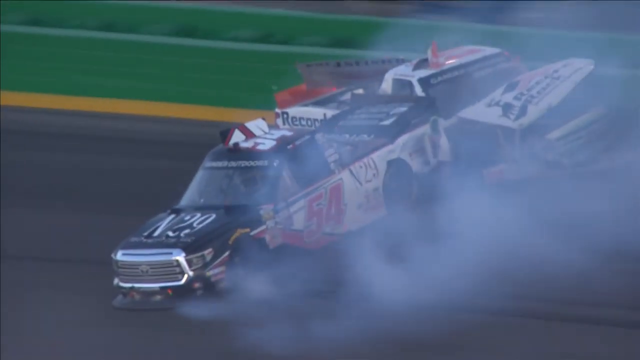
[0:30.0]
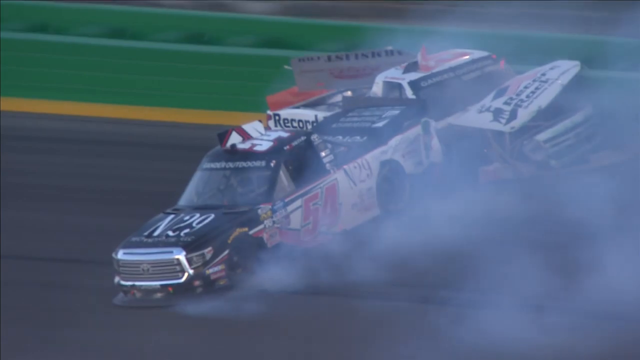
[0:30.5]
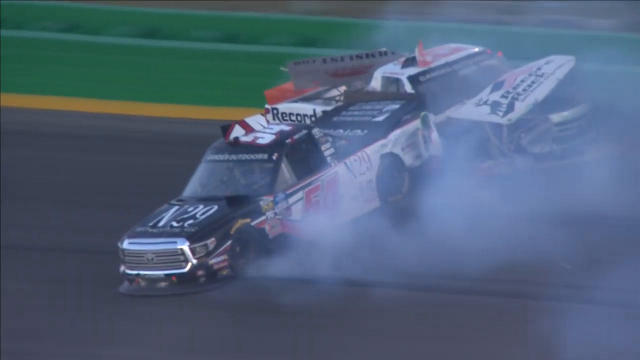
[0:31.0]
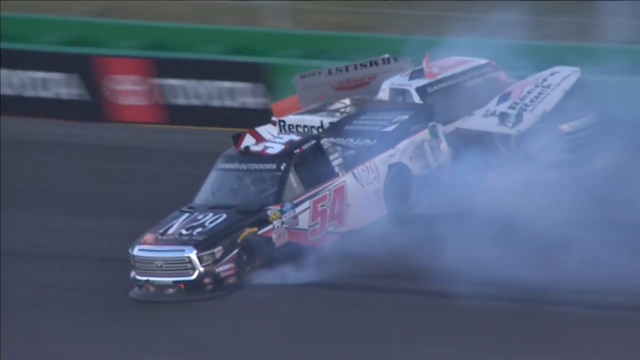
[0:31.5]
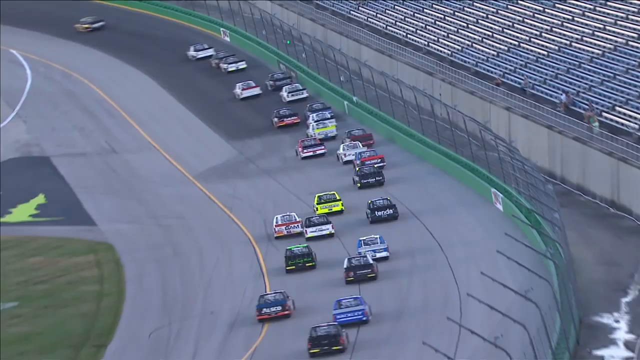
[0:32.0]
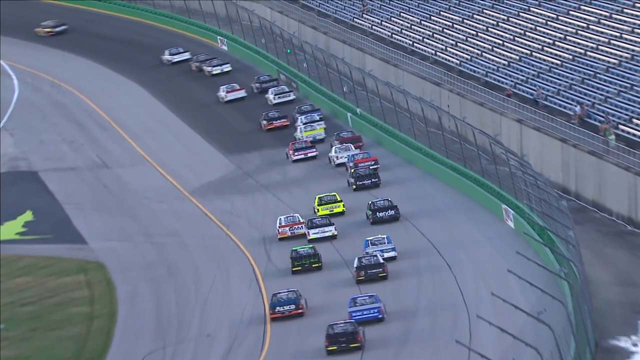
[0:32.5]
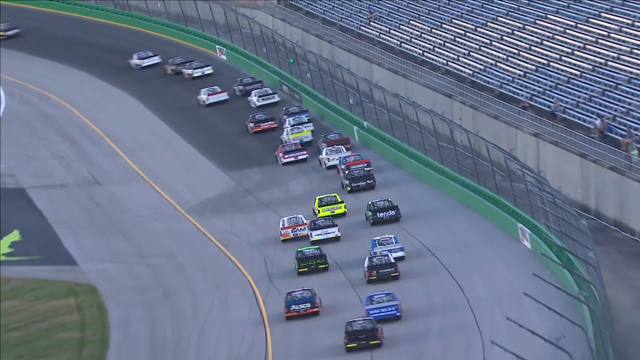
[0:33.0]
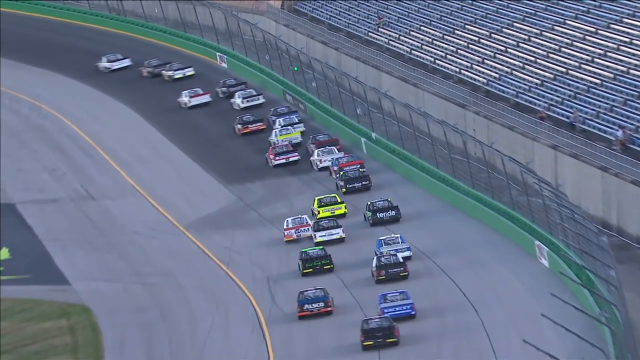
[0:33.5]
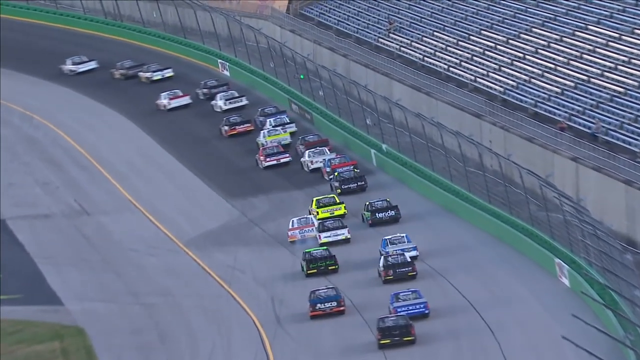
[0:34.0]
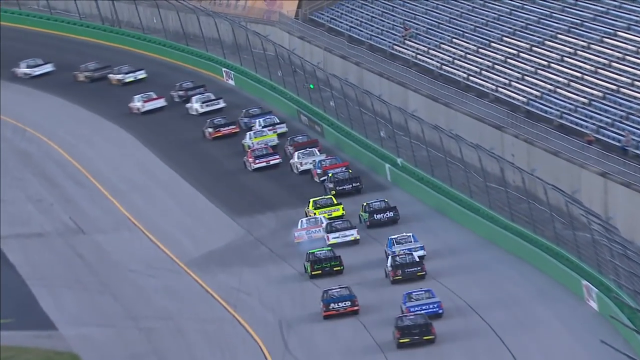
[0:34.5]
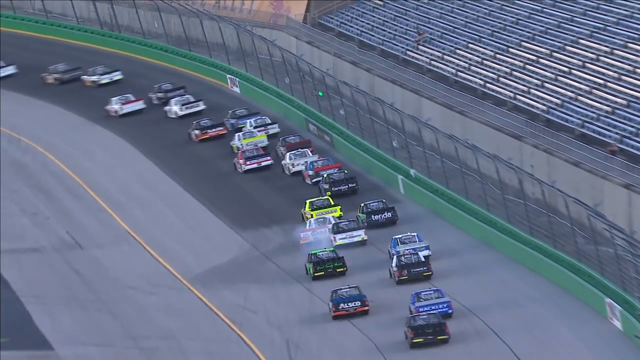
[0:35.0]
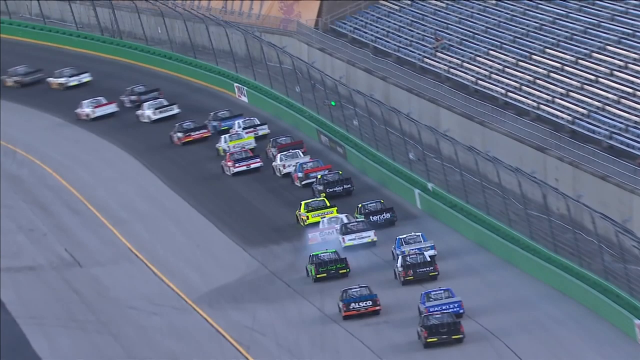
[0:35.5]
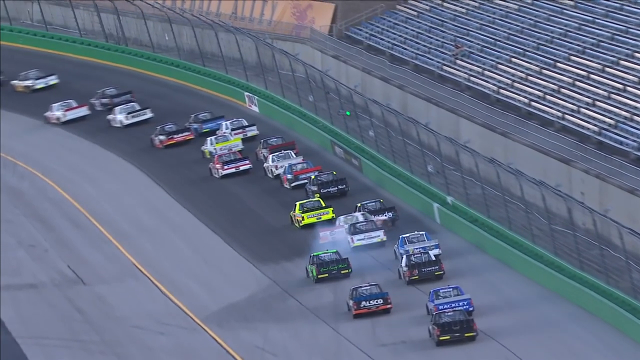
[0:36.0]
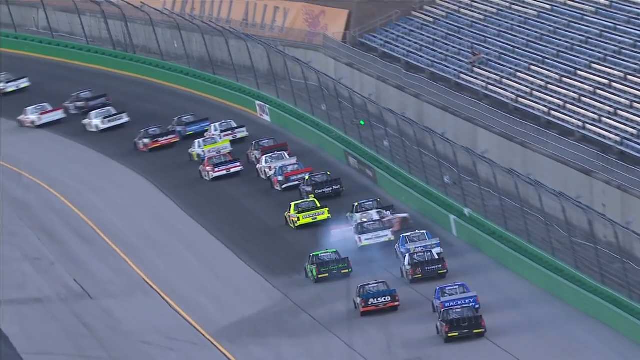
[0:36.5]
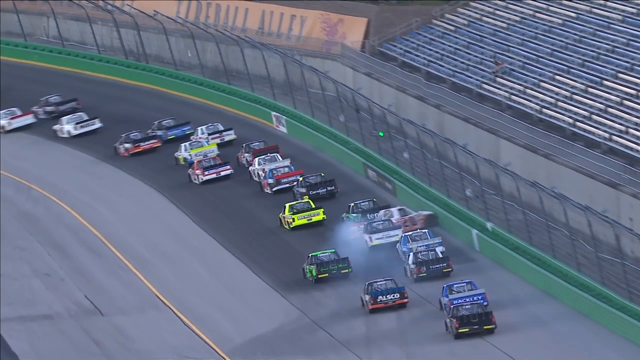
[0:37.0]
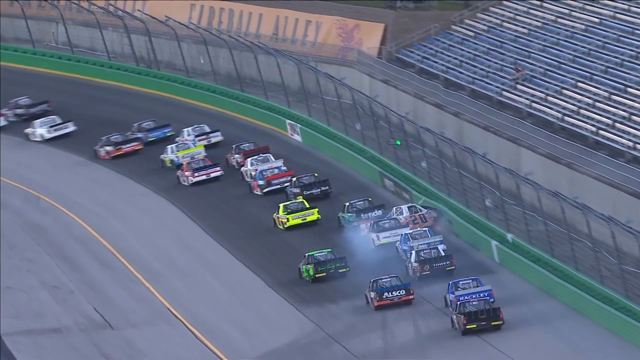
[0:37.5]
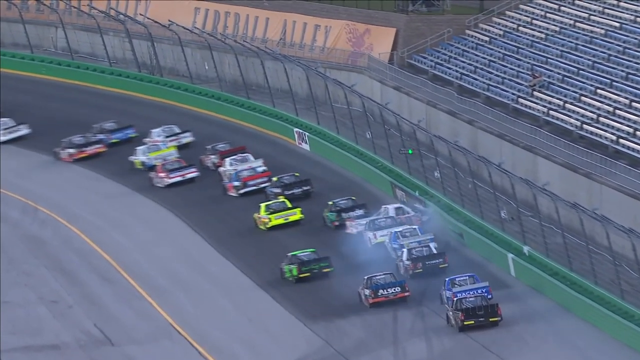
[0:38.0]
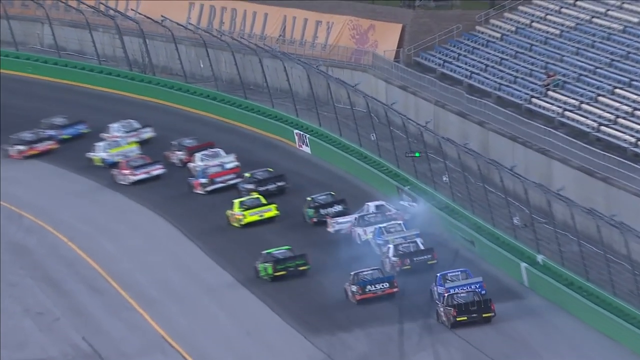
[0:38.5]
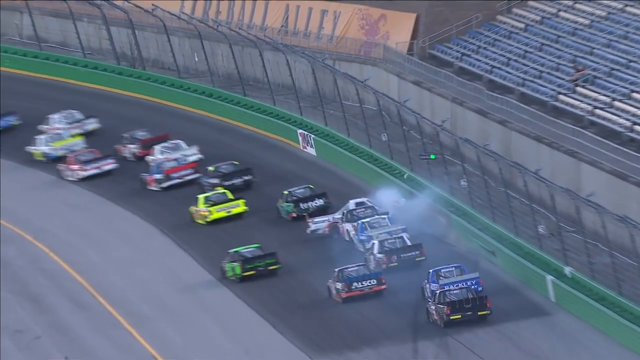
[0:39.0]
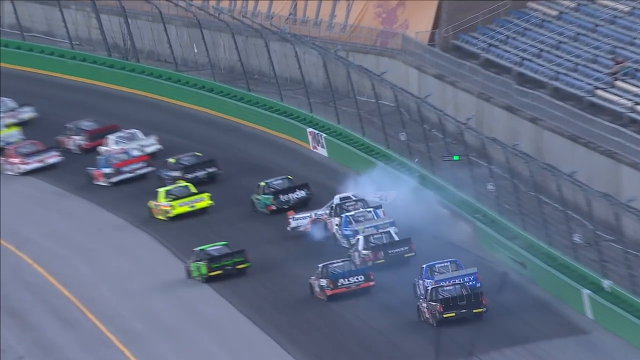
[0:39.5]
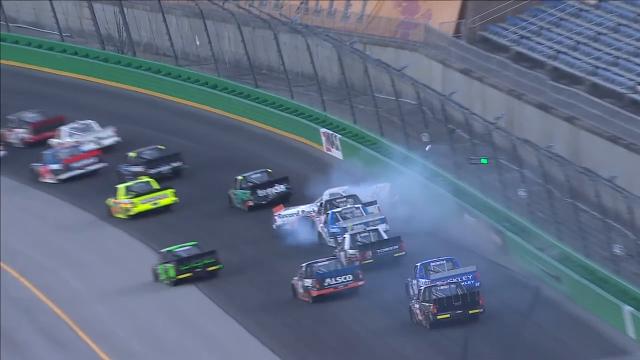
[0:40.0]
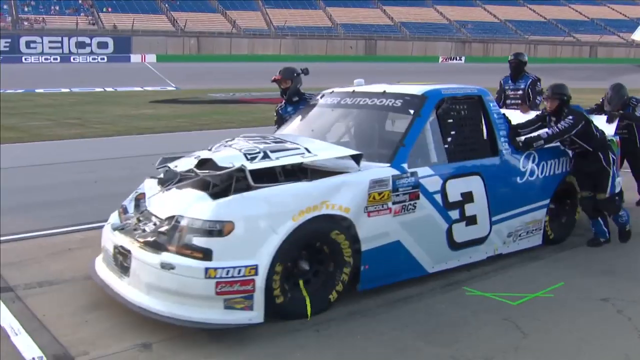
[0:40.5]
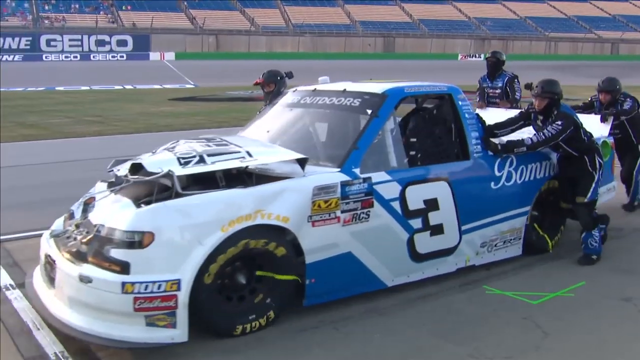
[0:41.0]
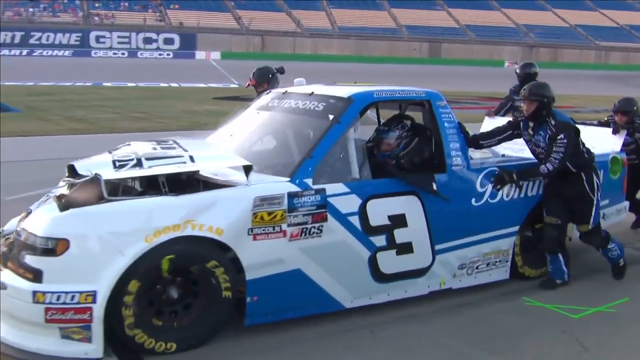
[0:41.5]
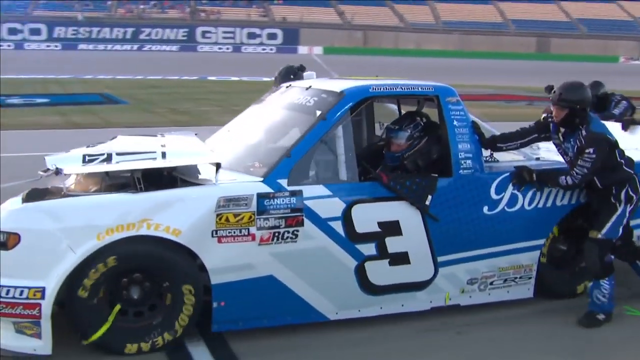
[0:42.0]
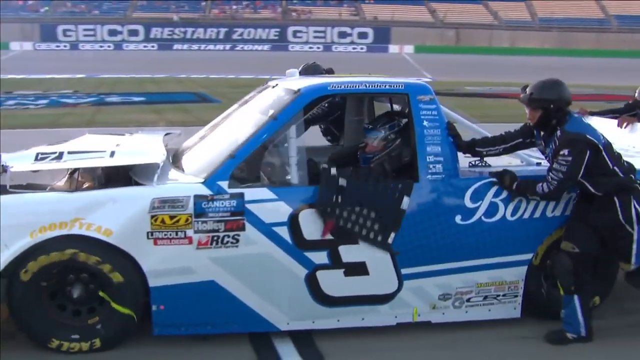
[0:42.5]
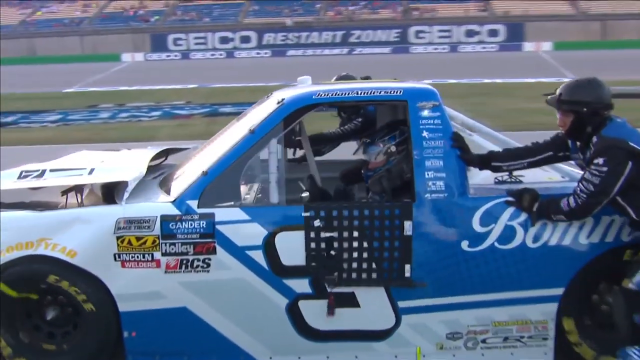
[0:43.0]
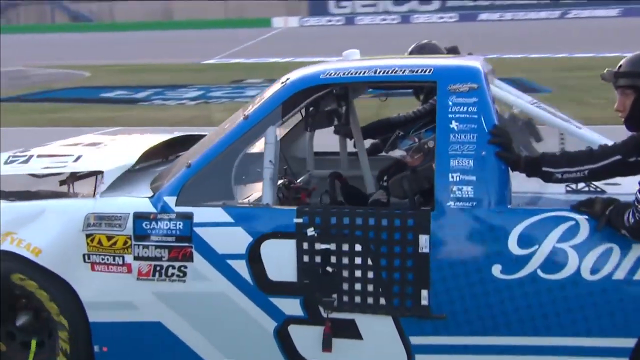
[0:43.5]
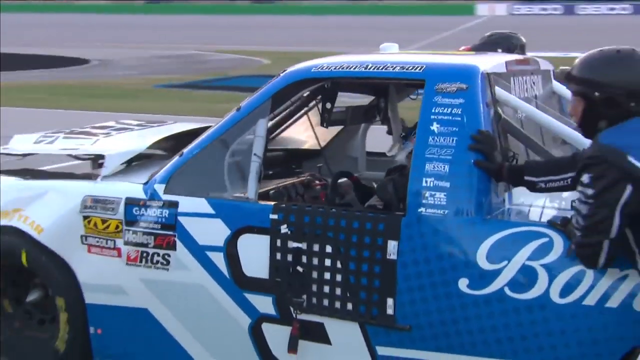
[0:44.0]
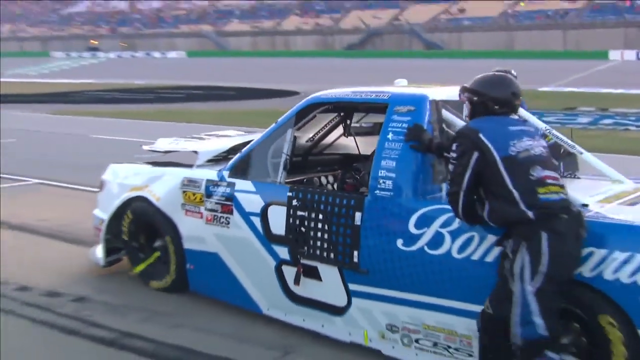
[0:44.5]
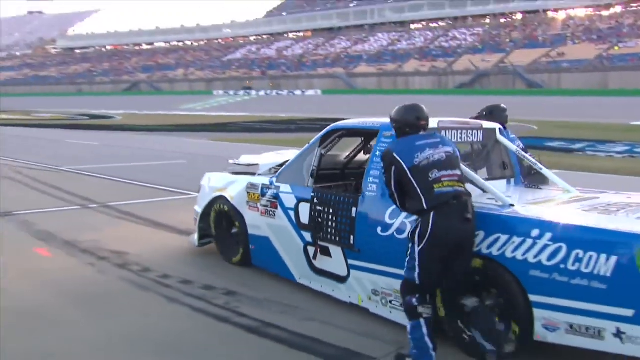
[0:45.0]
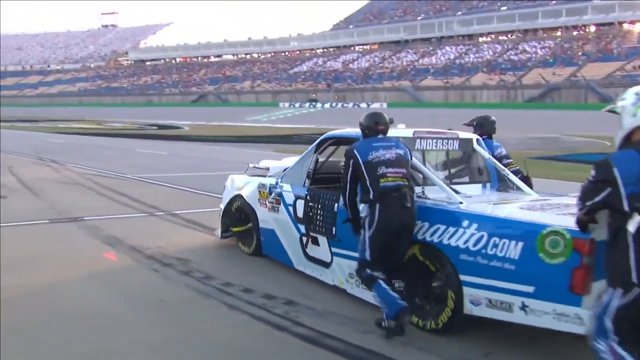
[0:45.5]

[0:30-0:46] The view is more zoomed in on the accident again. One car is moving backwards in the wrong direction, rear first, and the second car has its back up against the side door of the car that initially banked into the wall. A lot of smoke comes out of both cars. The view then returns to a high position looking down the raceway at all the cars racing, showing a replay of how it happened again: one car loses control, goes toward the right, and bangs into a green wall, and the second car then ends up hitting it. At the end of the video, several men push one car from the right side to the left side of the screen; it has the number three on the side door and its front hood is all banged up. The camera goes from a side angle to a slightly elevated position toward the back.